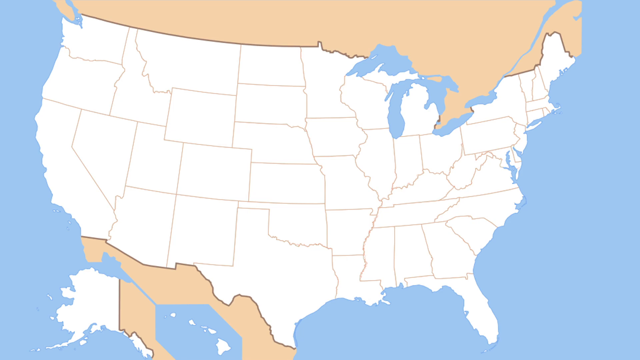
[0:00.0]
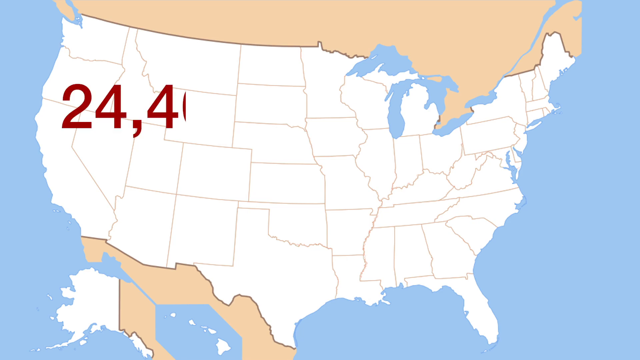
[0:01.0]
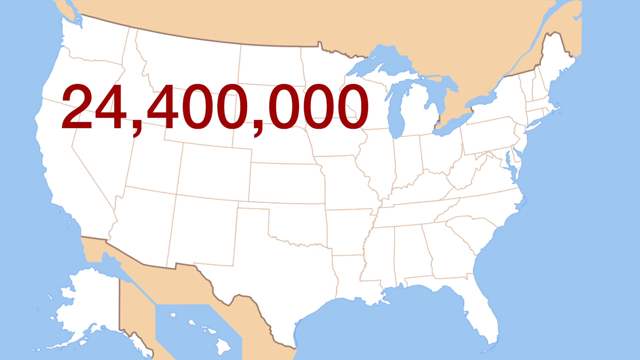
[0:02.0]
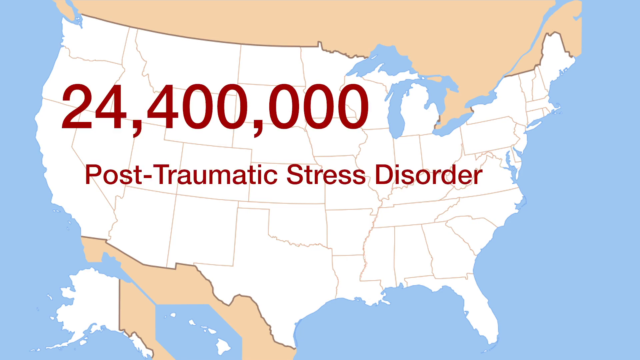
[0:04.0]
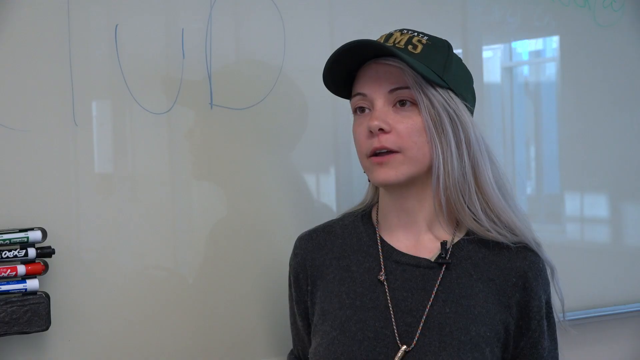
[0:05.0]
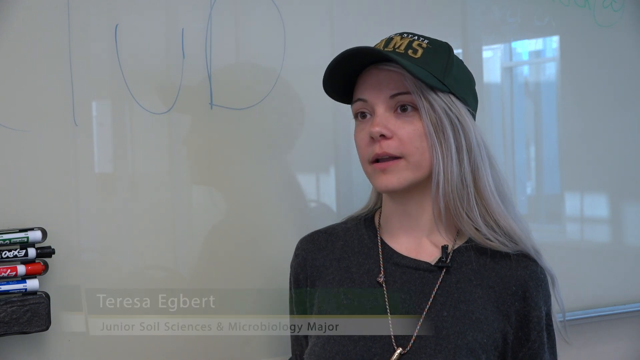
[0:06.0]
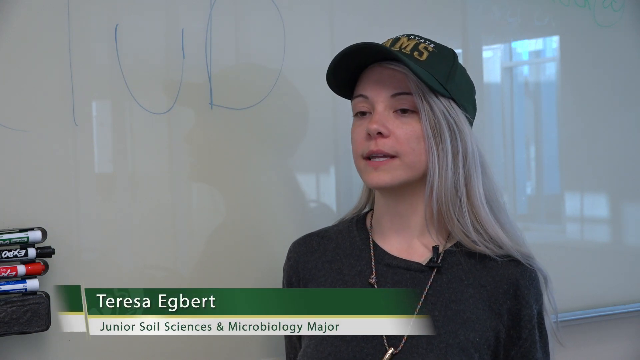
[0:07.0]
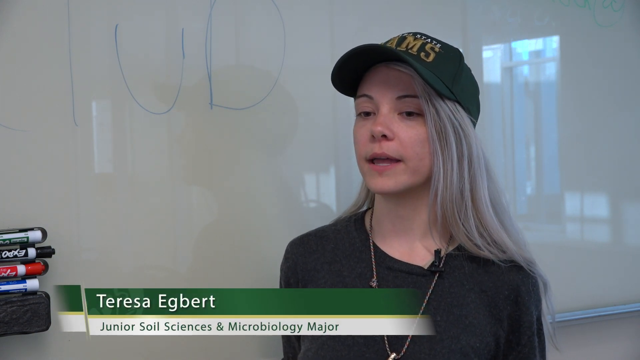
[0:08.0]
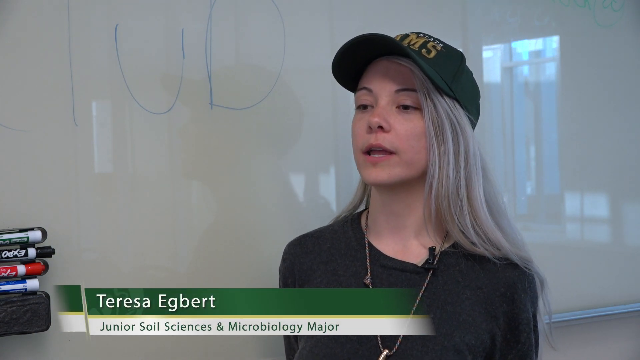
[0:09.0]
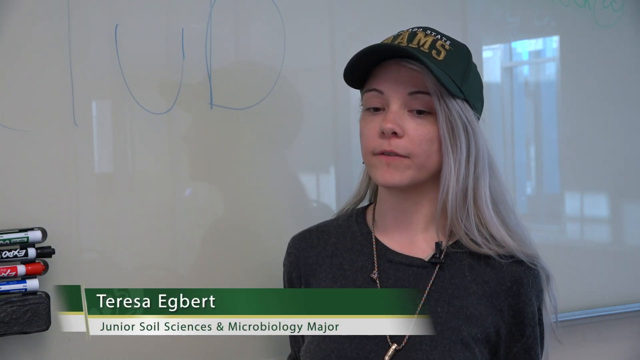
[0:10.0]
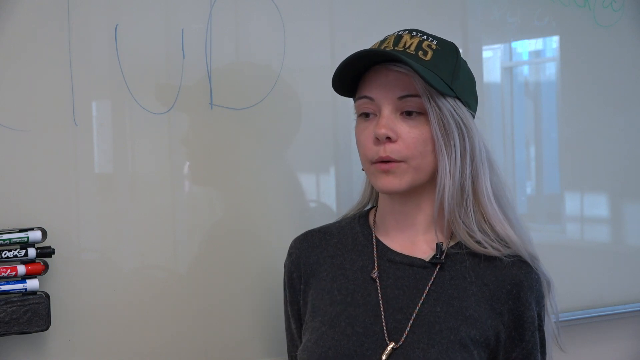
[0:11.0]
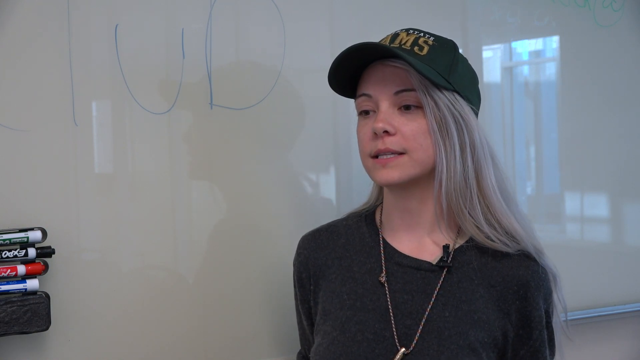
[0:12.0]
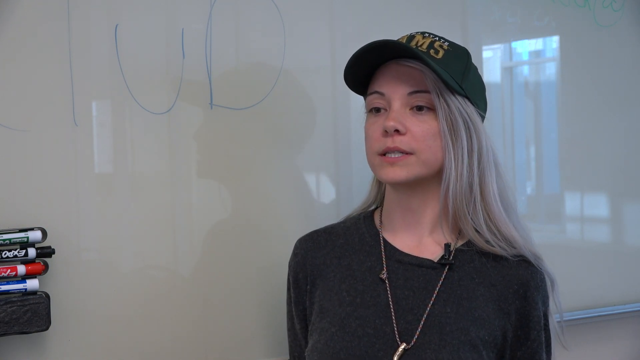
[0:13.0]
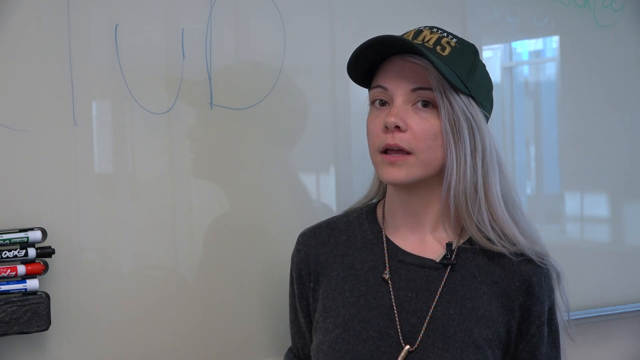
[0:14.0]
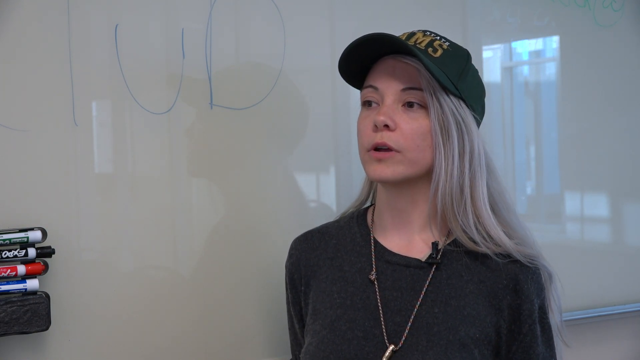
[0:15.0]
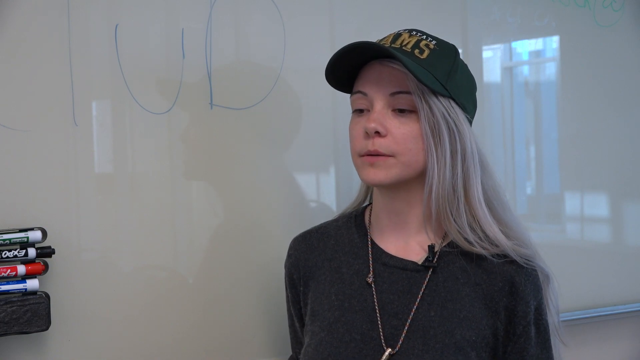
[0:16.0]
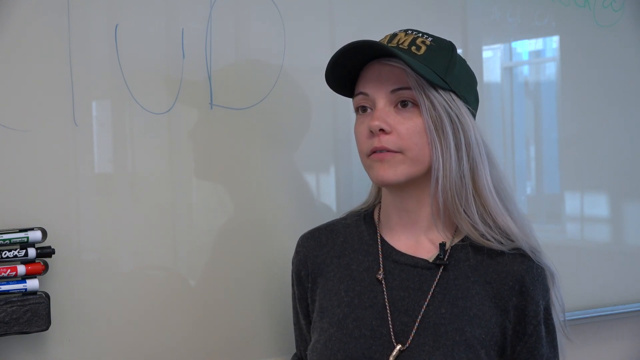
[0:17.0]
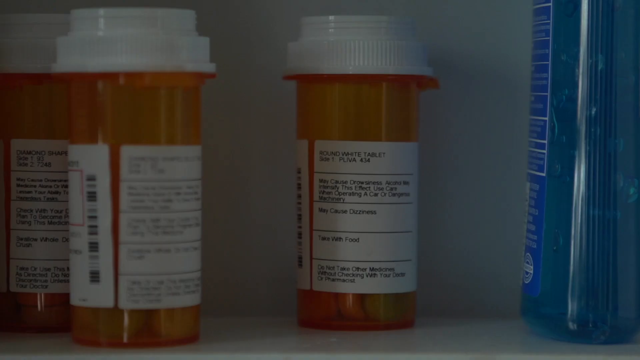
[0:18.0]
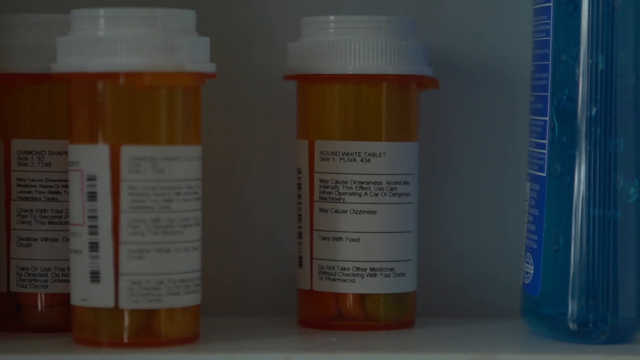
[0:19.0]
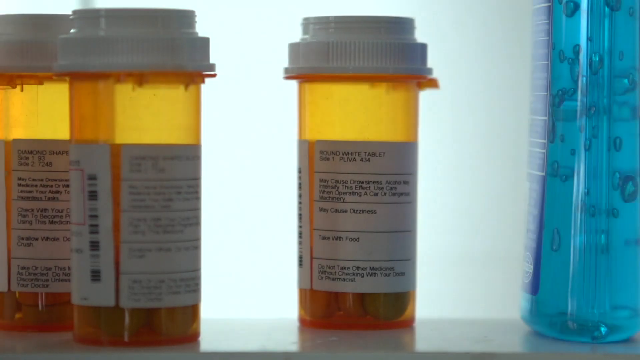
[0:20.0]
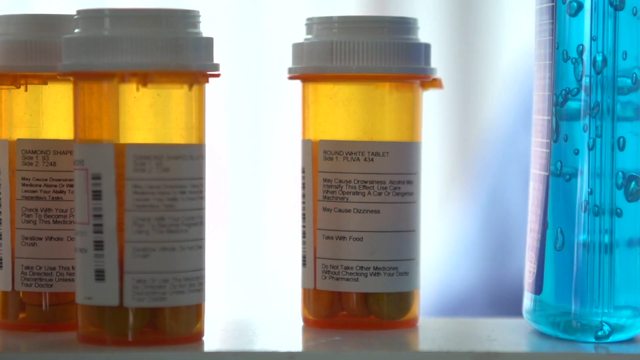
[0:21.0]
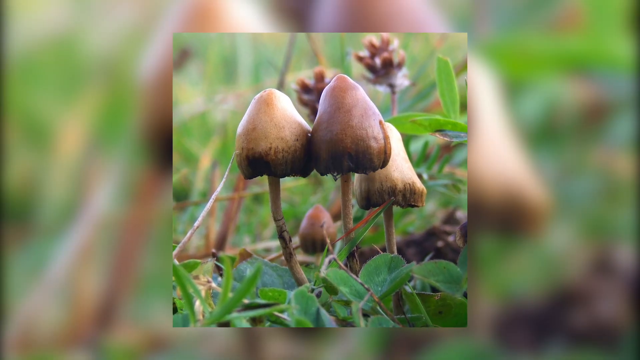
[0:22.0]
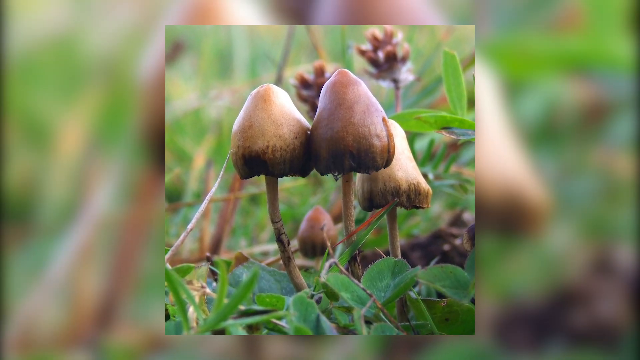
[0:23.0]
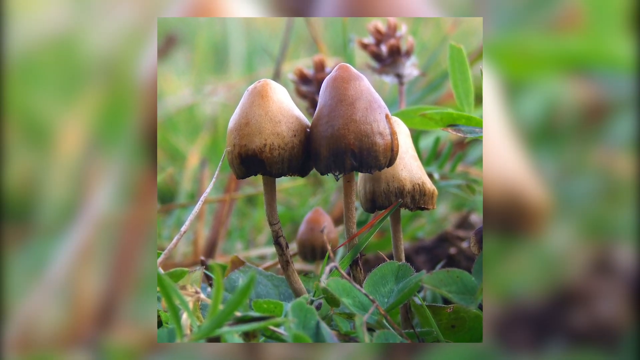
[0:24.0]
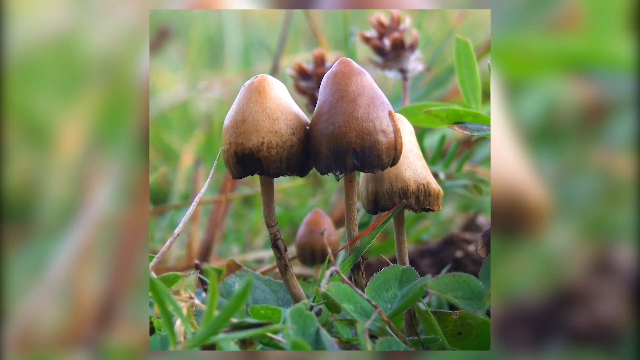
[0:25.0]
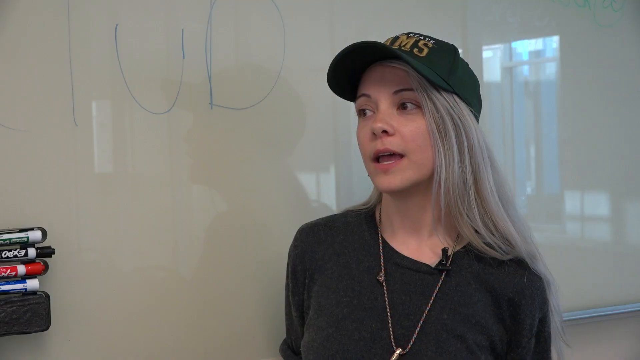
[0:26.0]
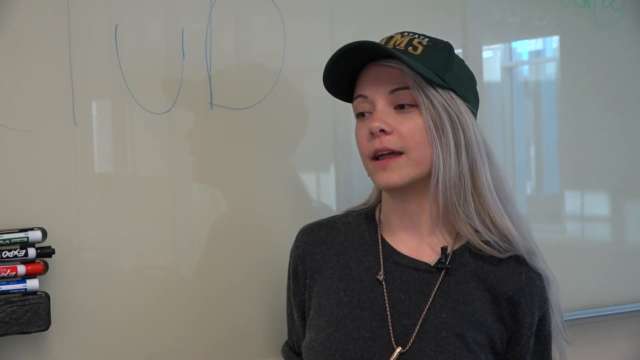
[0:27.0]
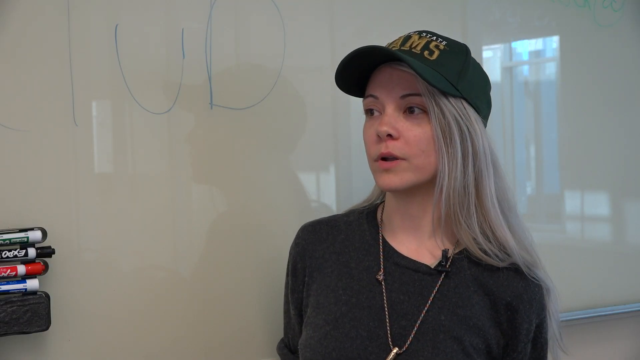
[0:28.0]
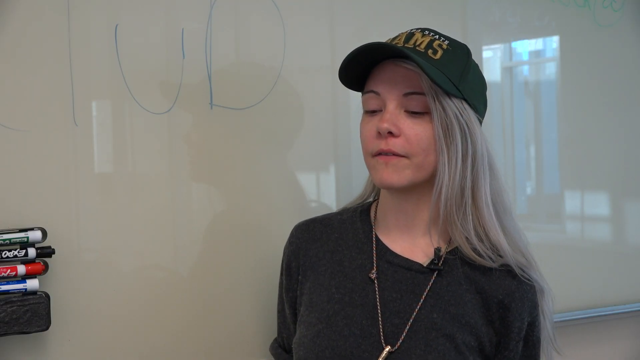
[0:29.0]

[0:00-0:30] A map of the United States appears on a light blue background; the map is all white with a kind of light tan outline, and "24,400,000 post-traumatic stress disorder" is written across it. A young woman is then seen speaking; she looks to be standing next to some kind of large board, maybe a dry-erase board, and she wears a hat. Text gives her name as "Teresa Egbert, junior soil sciences and microbiology major". Next comes what looks like a medicine cabinet with bottles of medication visible, followed by what look like two mushroom caps that seem to be growing in some type of large field. The video then returns to Teresa, who continues speaking.